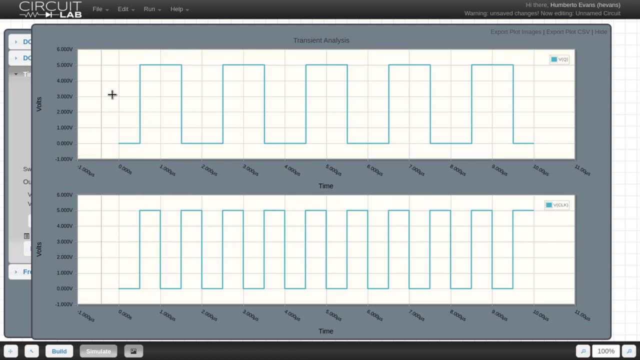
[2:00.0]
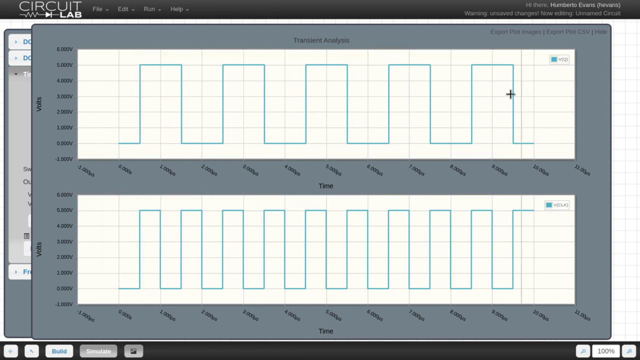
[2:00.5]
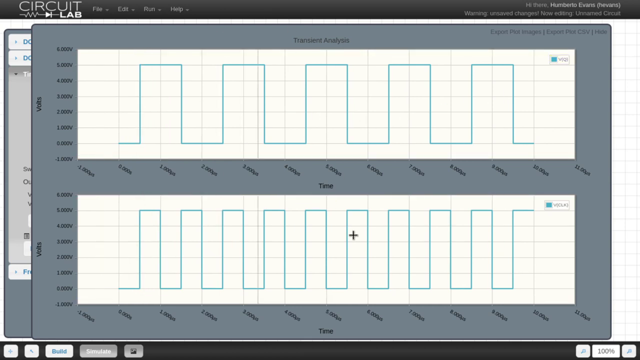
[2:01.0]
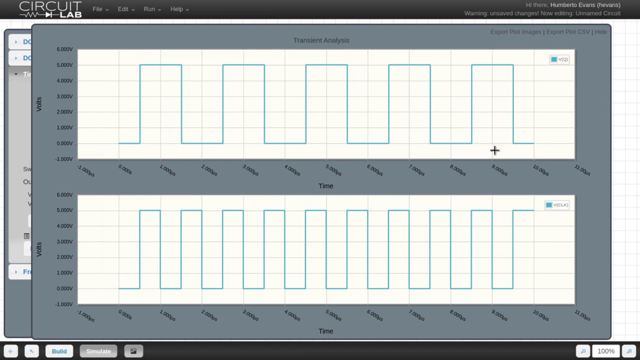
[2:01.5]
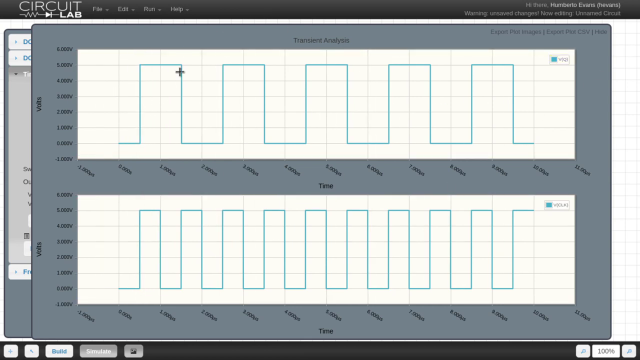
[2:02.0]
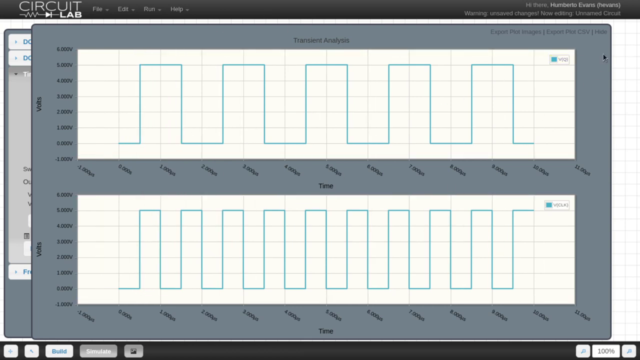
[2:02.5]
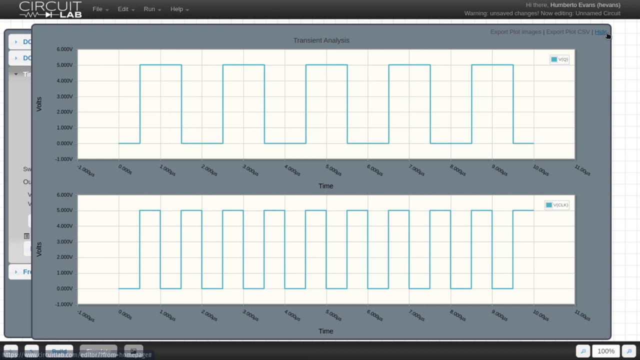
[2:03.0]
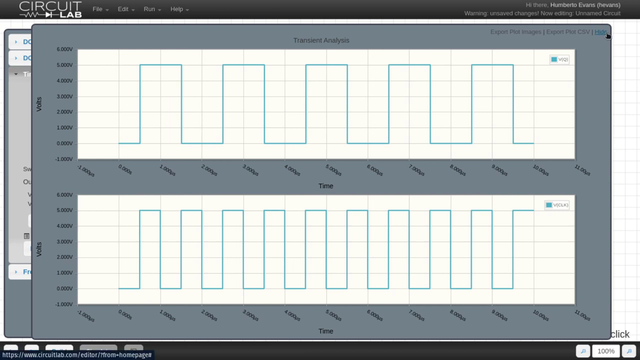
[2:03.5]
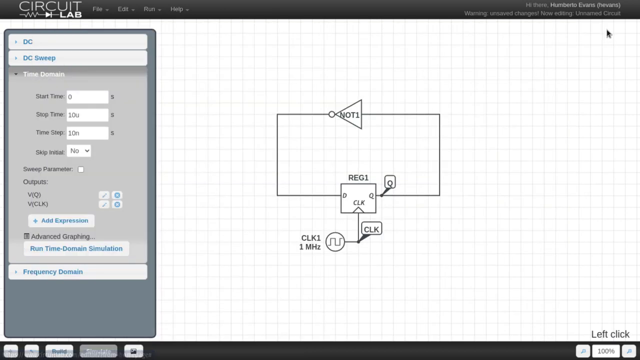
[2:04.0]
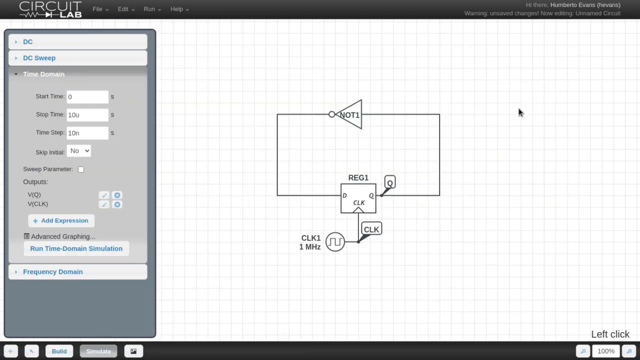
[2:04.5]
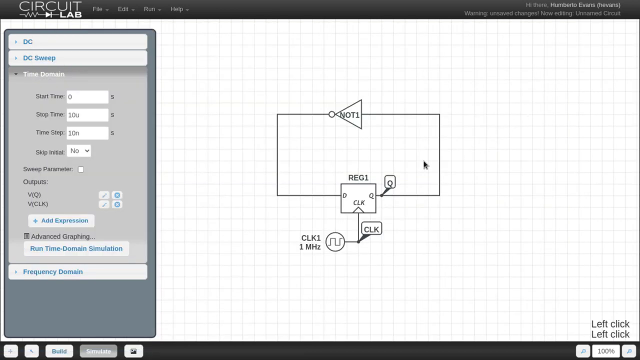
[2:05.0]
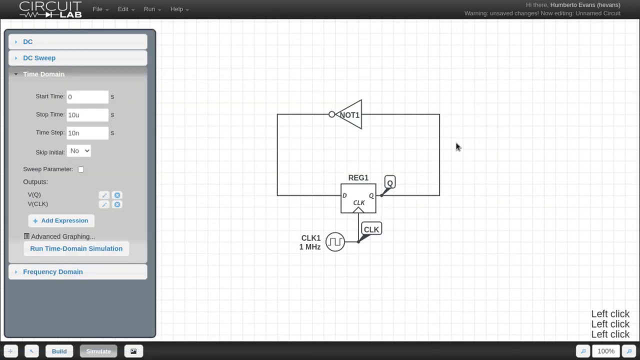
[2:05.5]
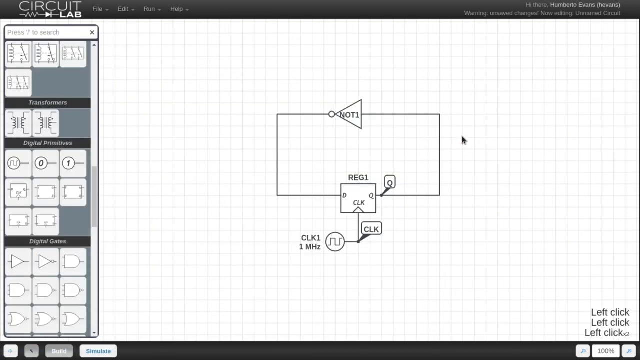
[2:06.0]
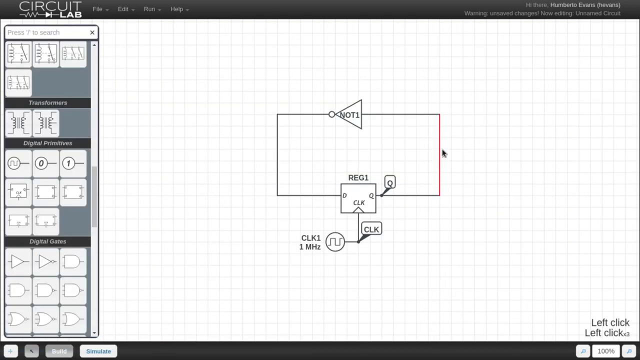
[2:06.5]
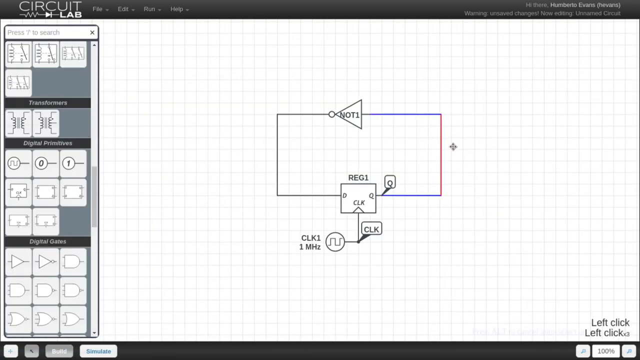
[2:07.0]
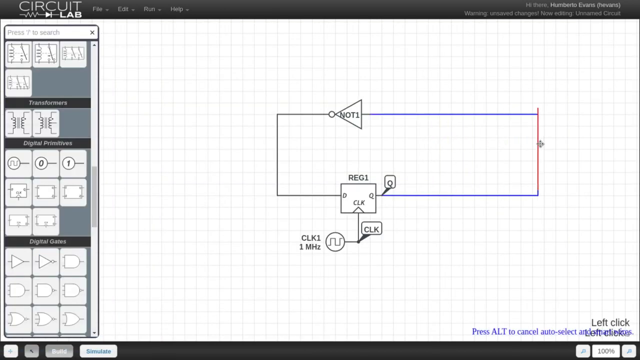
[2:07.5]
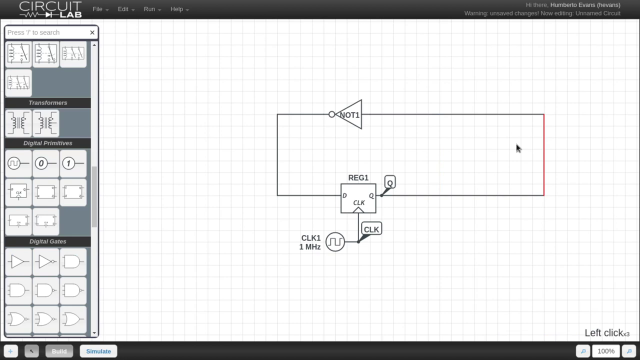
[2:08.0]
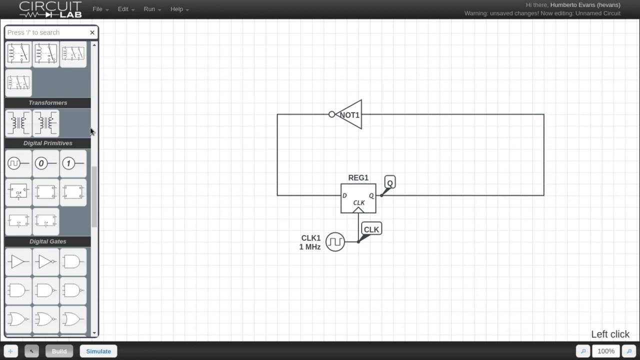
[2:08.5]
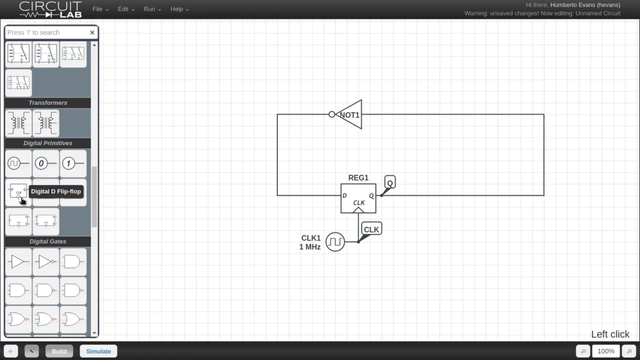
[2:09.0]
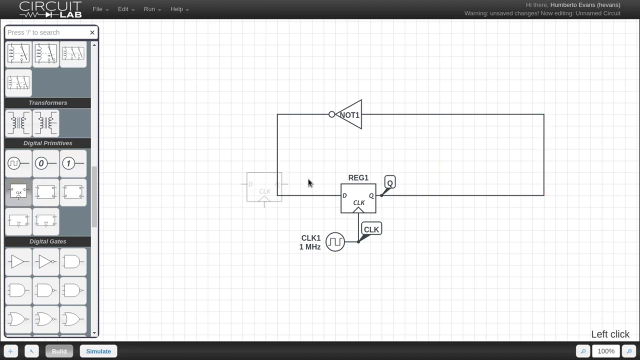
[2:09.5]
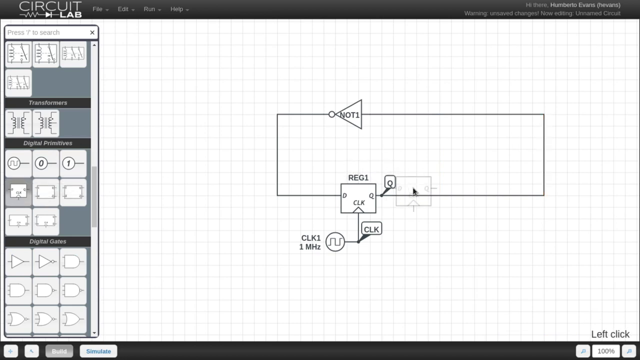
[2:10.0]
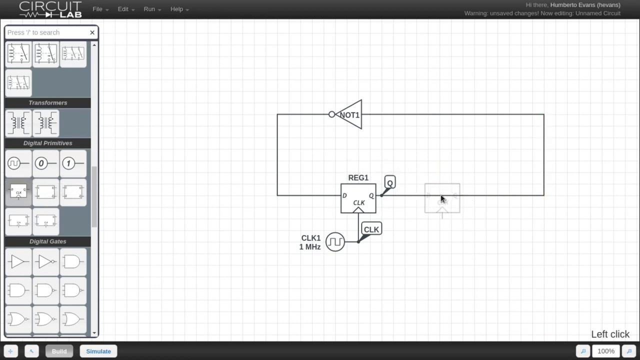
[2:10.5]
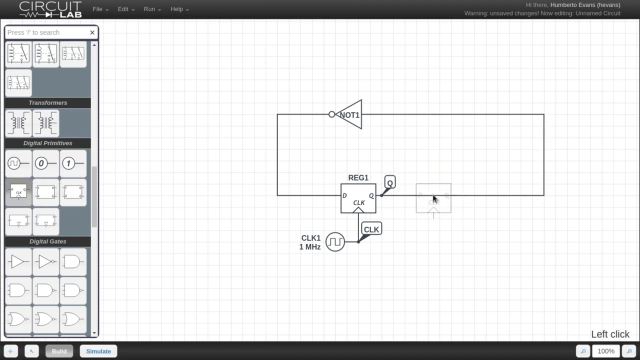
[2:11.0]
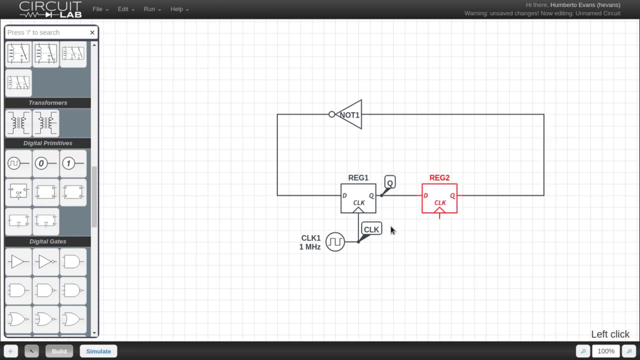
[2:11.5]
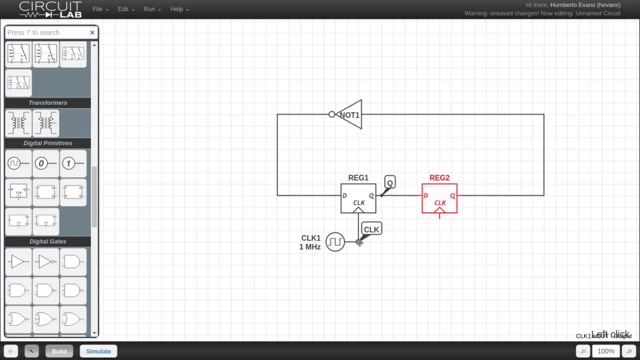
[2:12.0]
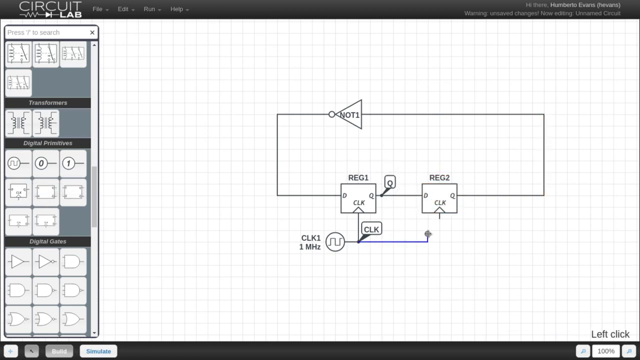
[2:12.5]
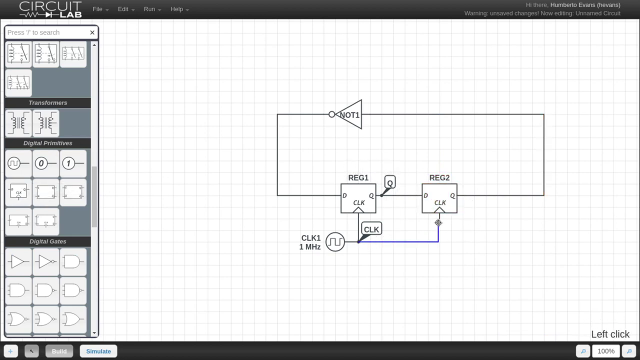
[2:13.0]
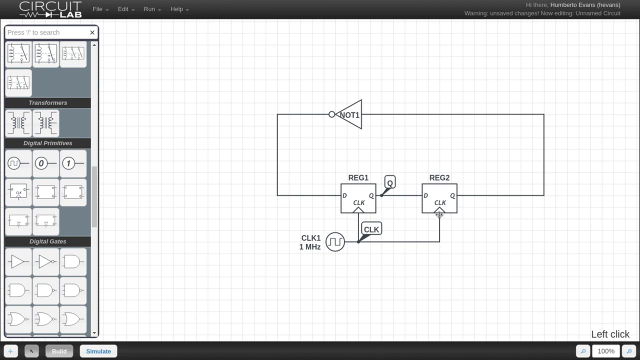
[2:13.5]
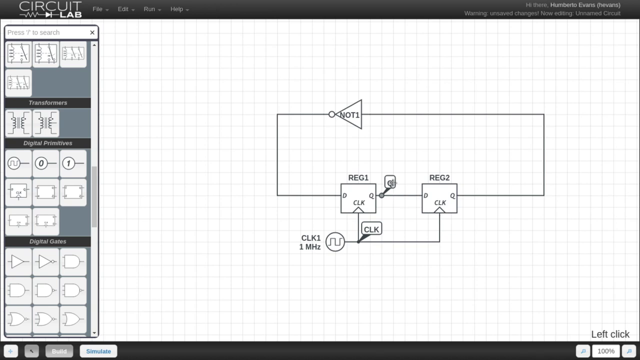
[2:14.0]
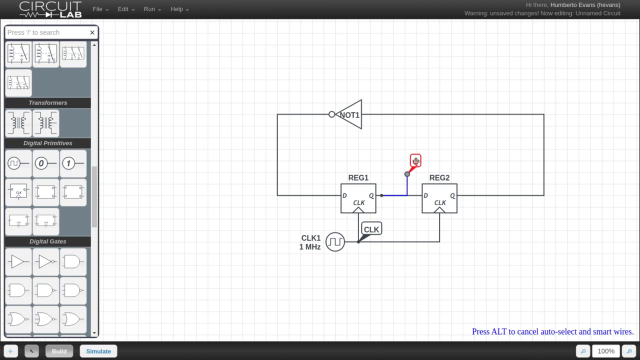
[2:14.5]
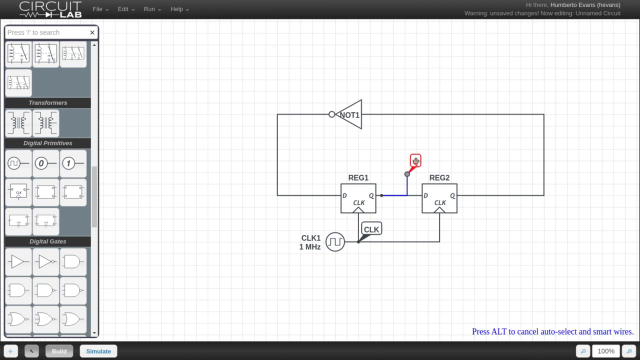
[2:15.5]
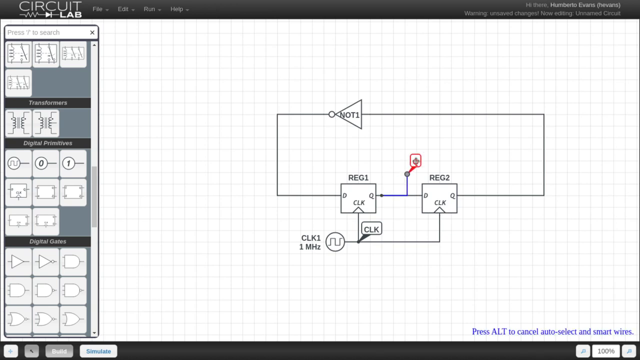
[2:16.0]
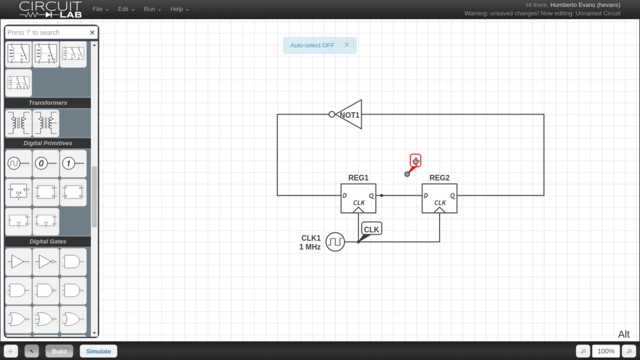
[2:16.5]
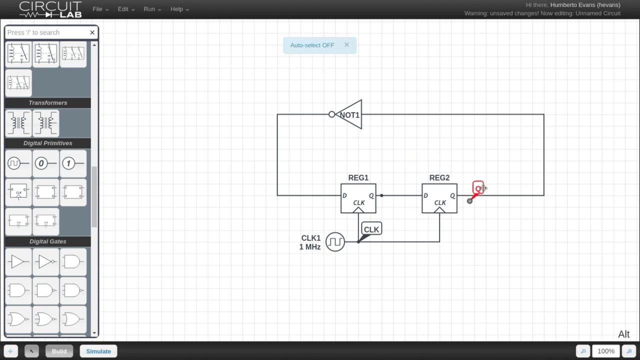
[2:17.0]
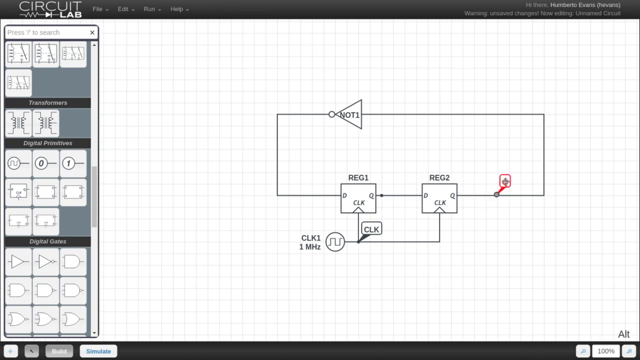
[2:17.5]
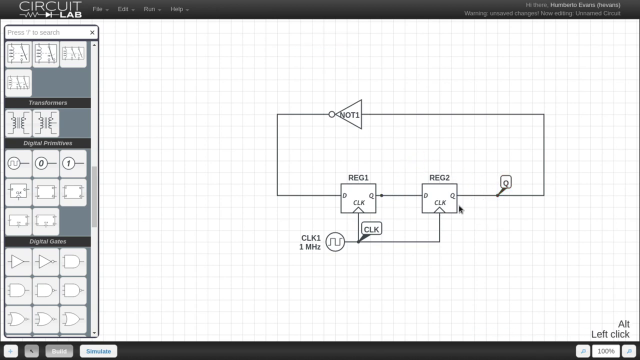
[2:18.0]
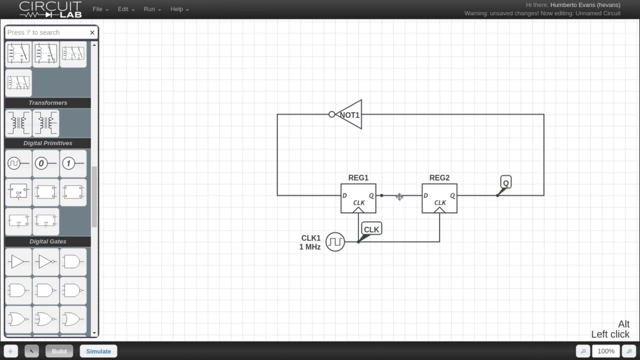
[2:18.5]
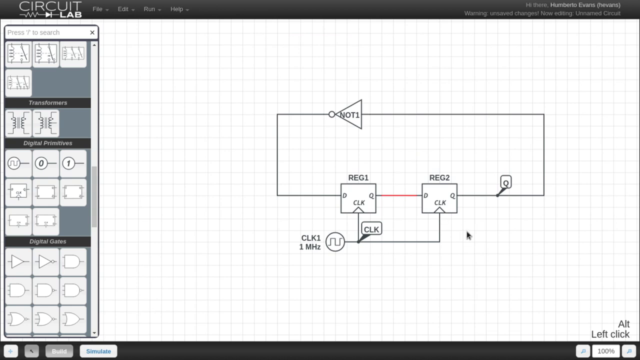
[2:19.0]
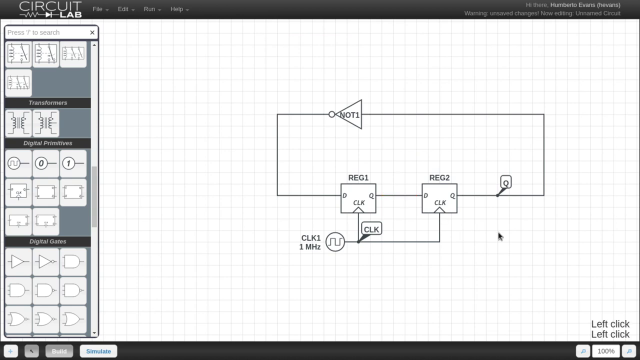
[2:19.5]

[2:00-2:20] The screen recording of the Circuit Lab program shows a graphic called transient analysis. The cursor points out two graphs, both blue, one bigger than the other, and moves around both. The person clicks hide, and the canvas with a drawn circuit opens. With the cursor, he selects a side of the diagram and moves it to make it bigger. He then goes to the tools, selects another figure, and drags it onto the line he made bigger, positioning the new element, called reg2. He holds part of the line to attach it to the new element, moves other parts of the diagram with the cursor, and the video stops.